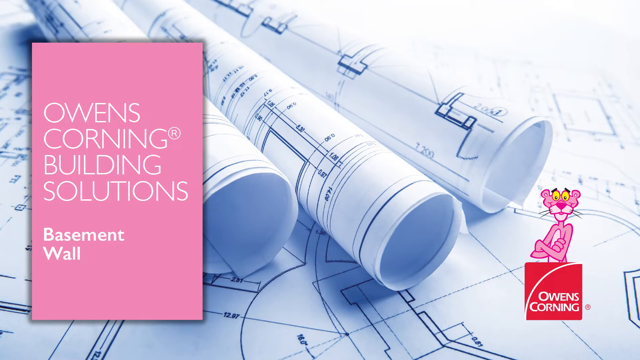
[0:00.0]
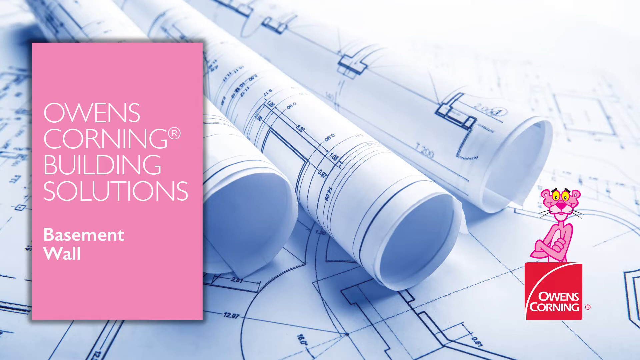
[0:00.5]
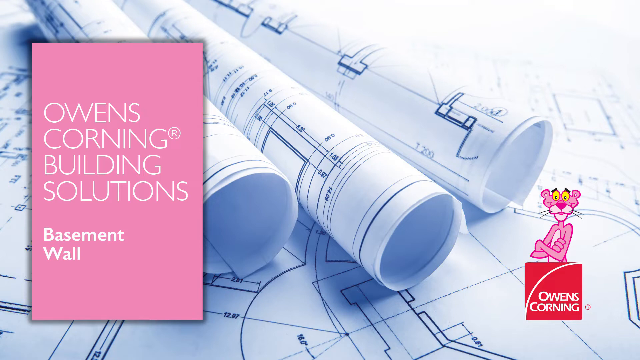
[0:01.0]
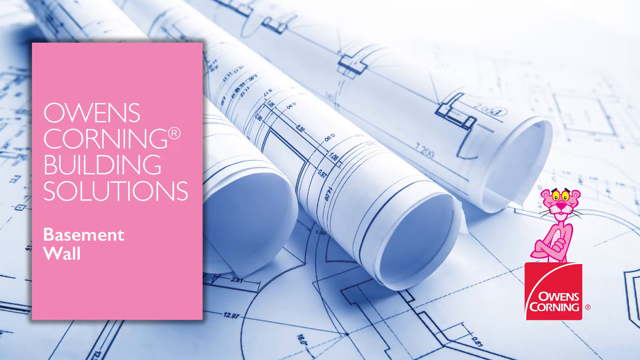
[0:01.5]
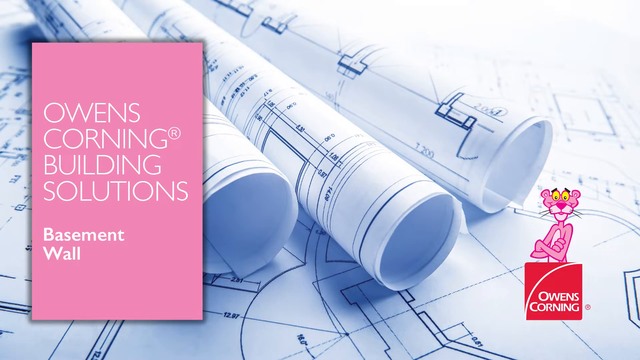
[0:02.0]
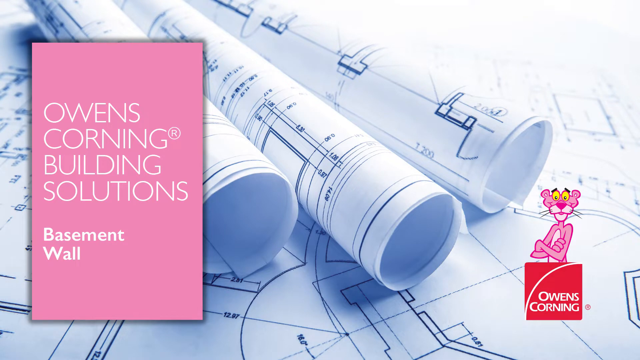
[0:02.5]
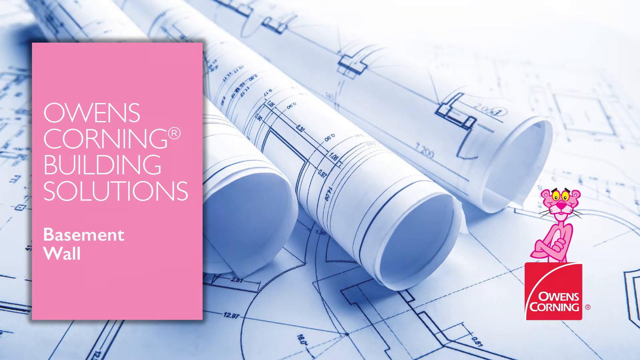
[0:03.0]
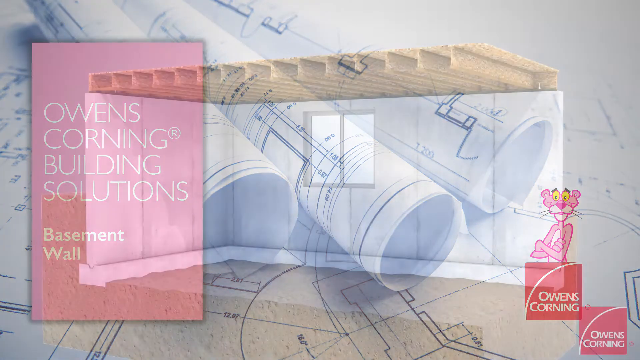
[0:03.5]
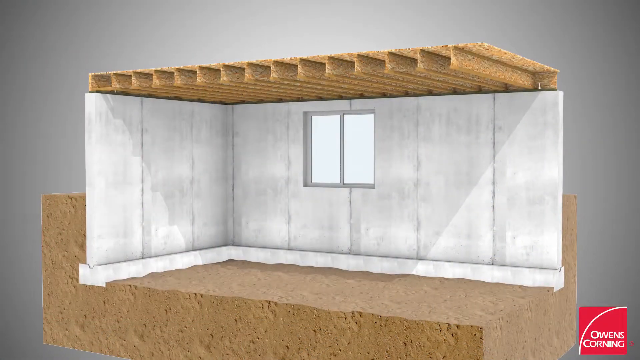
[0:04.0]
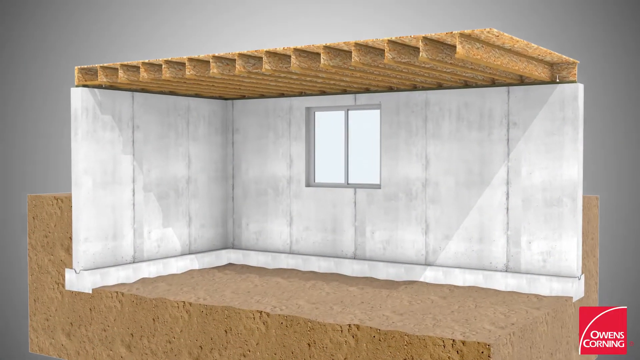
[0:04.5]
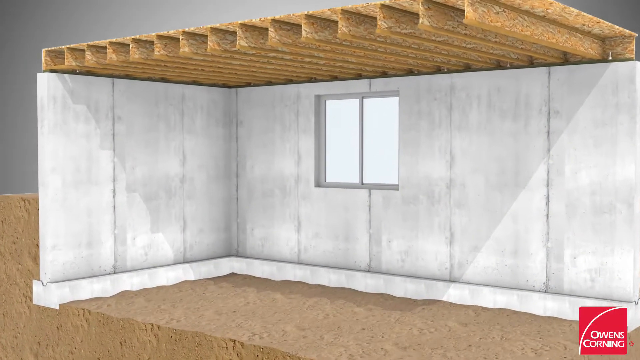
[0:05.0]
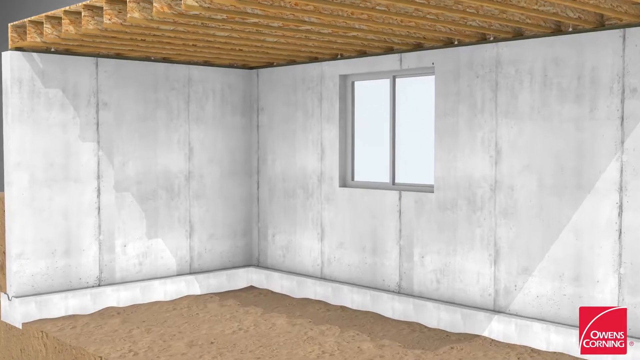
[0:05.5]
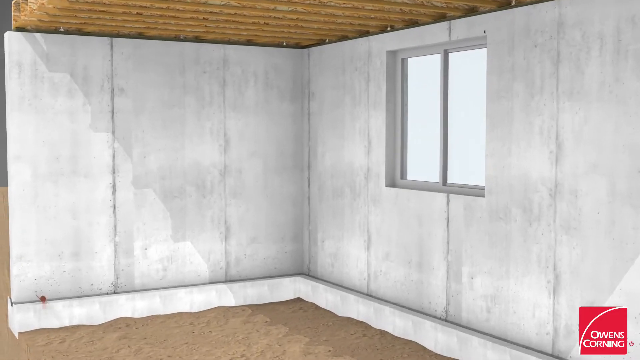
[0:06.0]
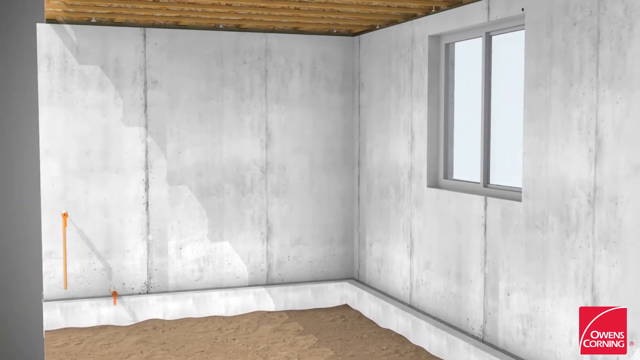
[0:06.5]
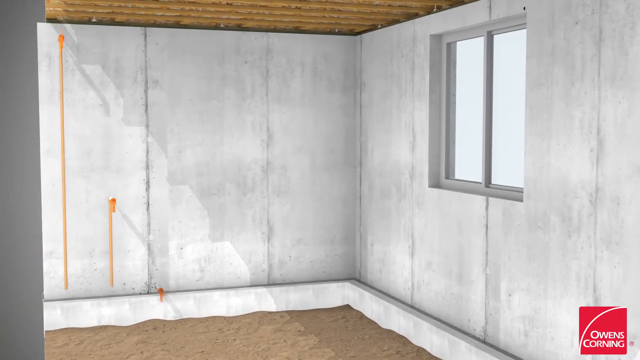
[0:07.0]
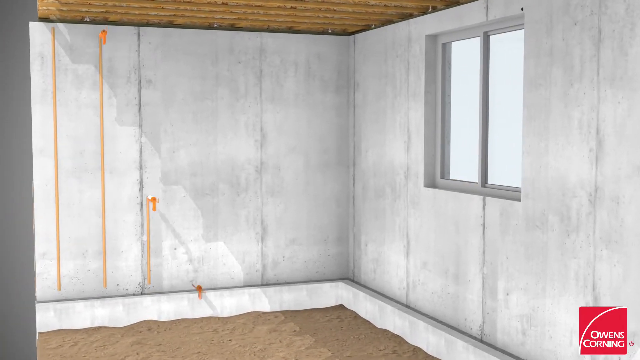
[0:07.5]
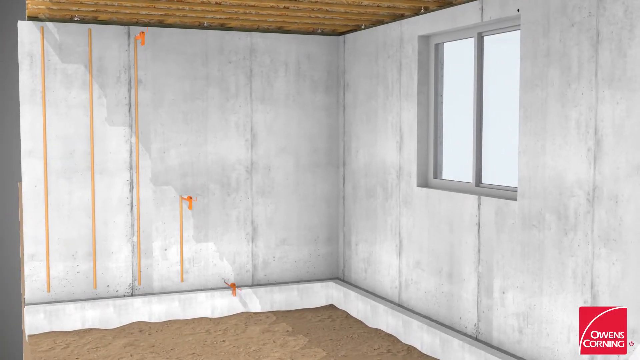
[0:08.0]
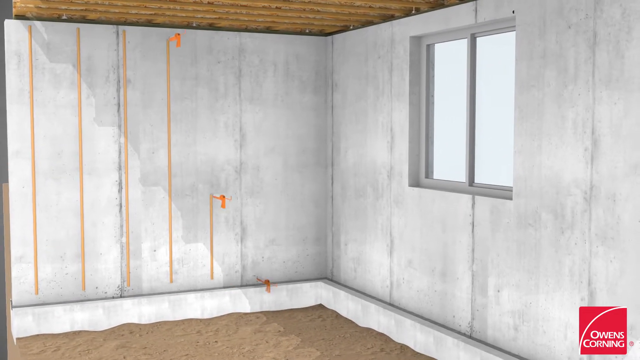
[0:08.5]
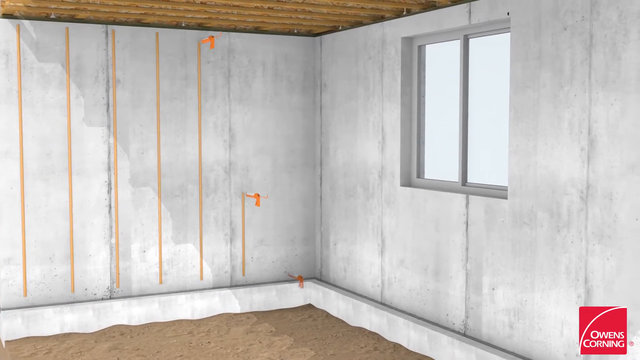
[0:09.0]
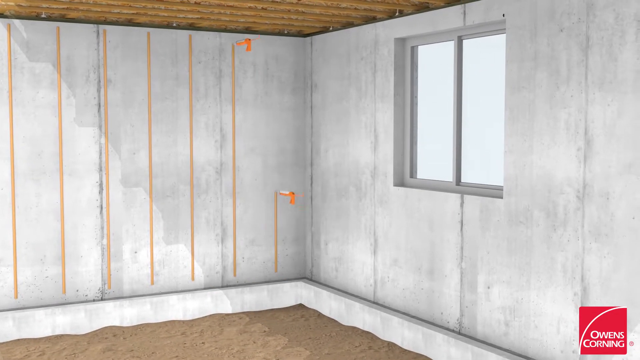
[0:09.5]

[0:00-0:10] Text reads "Owens Corning Building Solutions basement wall." Schematics appear, followed by the bare interior of a building, all in 3D rendering. Adhesive is shown, and measurements move around the space. Text reads "acoustic caulking sealant." Insulation goes up, and the view sort of zooms out and pans across what is just the frame of the inside of a building. "Owens Corning" appears in the bottom right corner. The view zooms out to show the inside of the building, and "optional vapor retarder" appears in white text. The view scrolls away and shows a floor being put in, then zooms into the insulation of the roof beams of the room. Framing goes in with wood planks, and insulation is laid between them. The view zooms around, showing more pink insulation laid throughout the wall, then zooms out to a roughly completed state, apparently showing how it protects against moisture. Nails then appear.